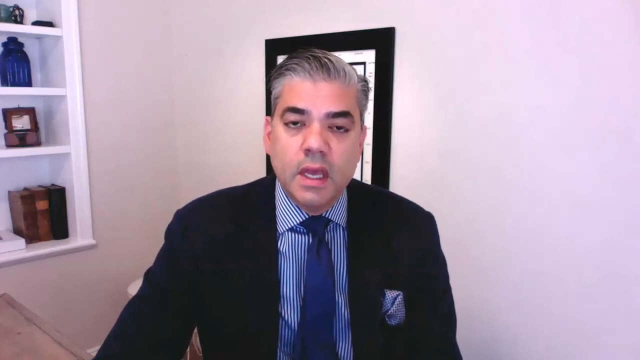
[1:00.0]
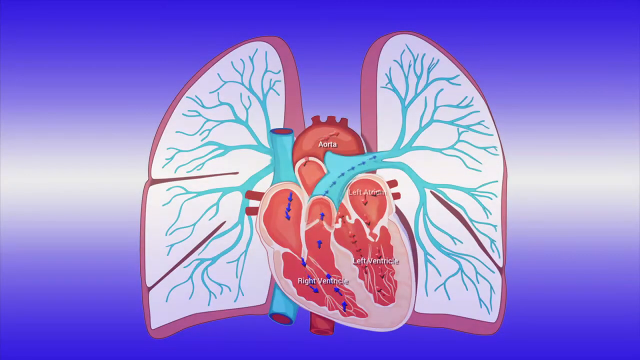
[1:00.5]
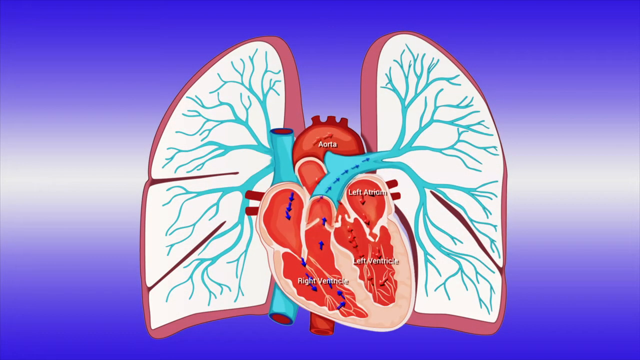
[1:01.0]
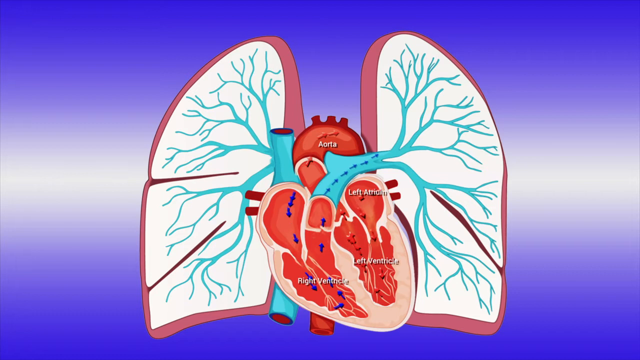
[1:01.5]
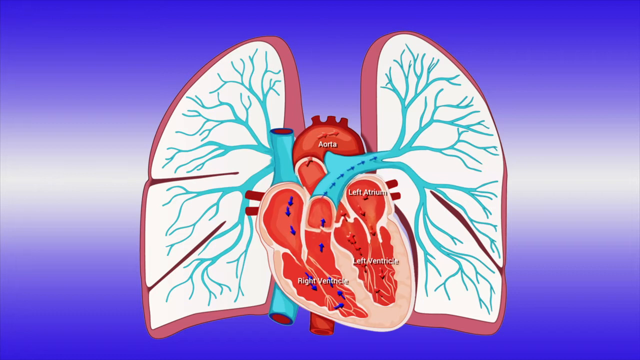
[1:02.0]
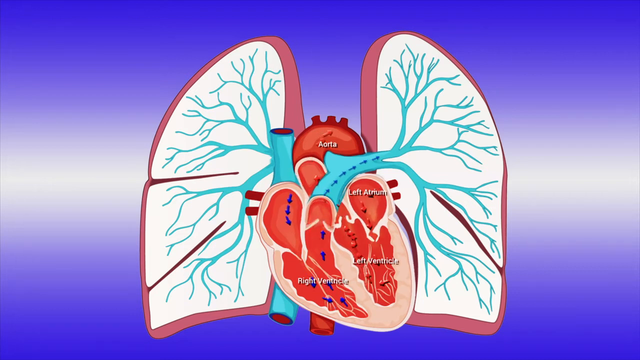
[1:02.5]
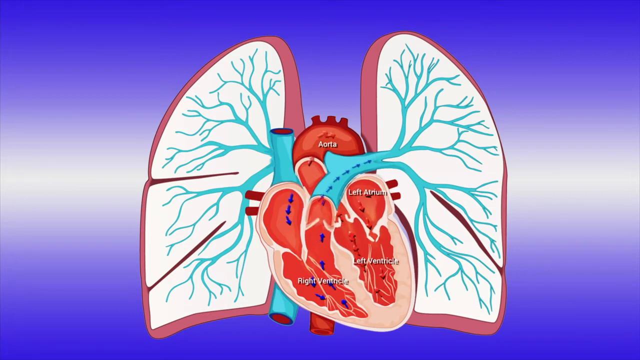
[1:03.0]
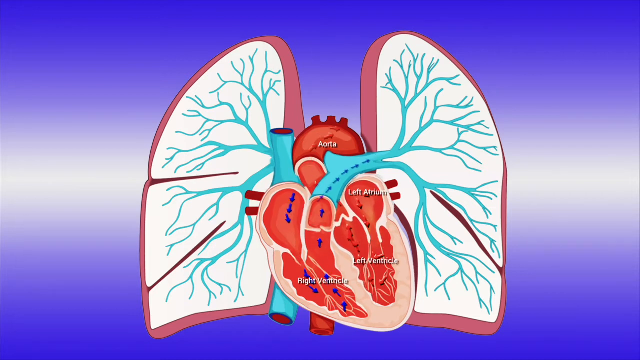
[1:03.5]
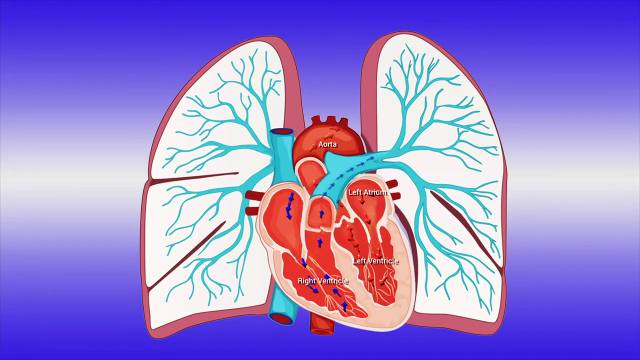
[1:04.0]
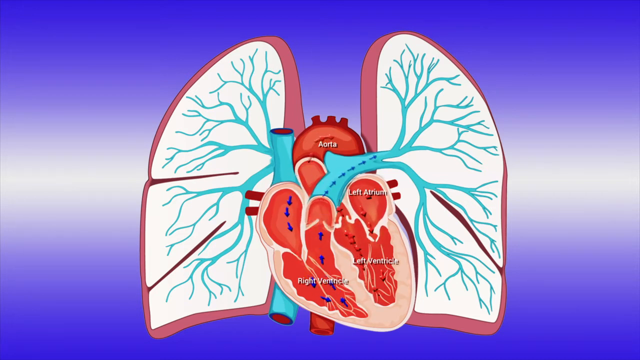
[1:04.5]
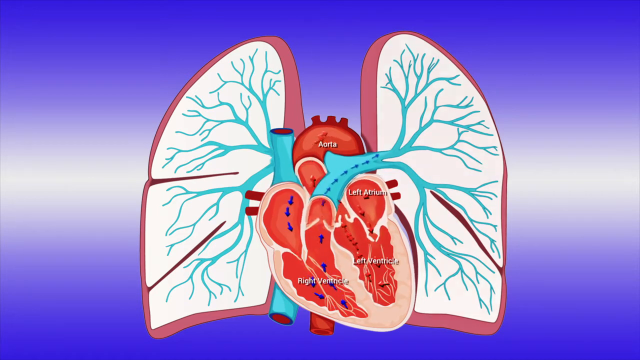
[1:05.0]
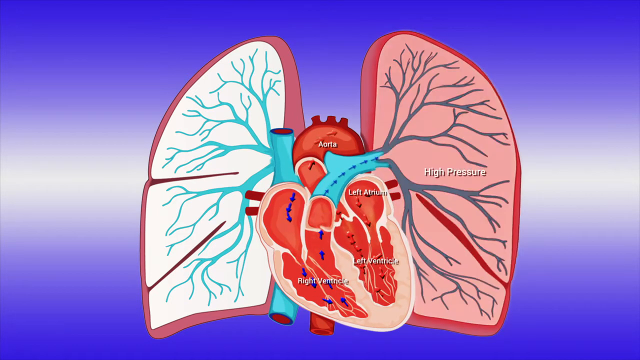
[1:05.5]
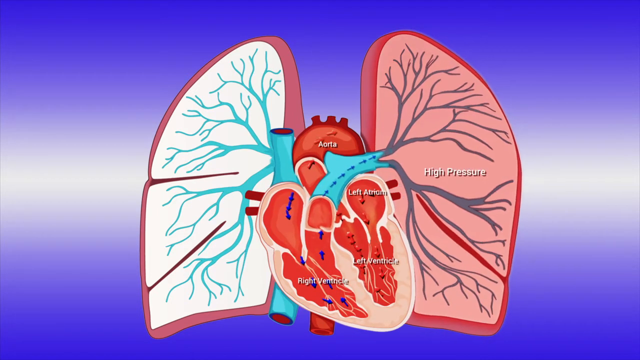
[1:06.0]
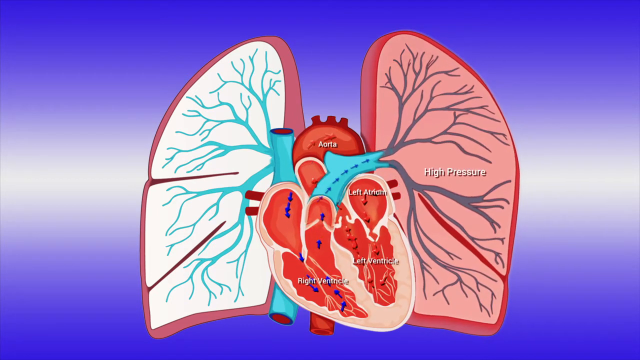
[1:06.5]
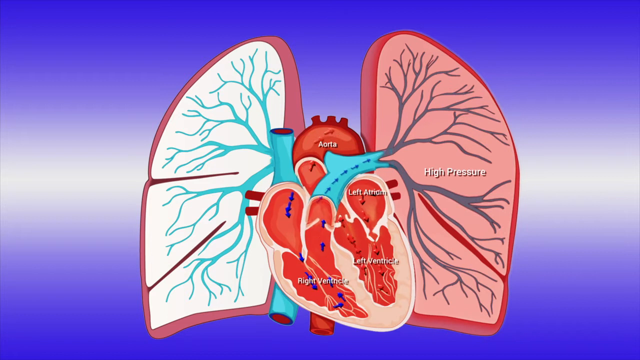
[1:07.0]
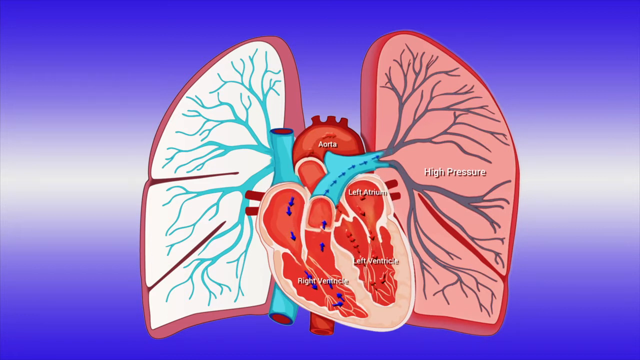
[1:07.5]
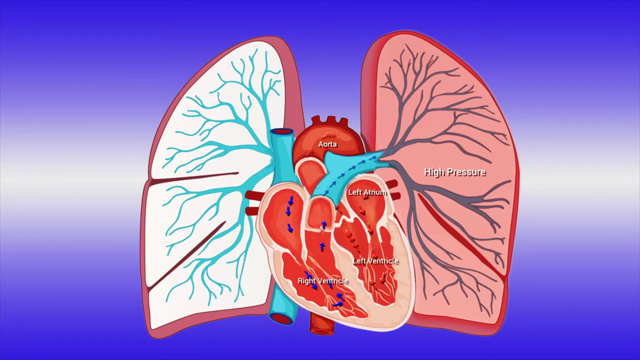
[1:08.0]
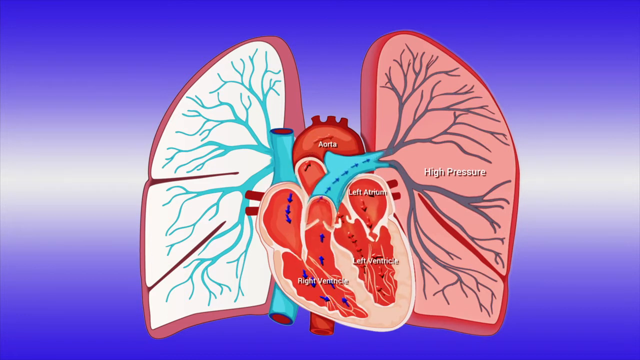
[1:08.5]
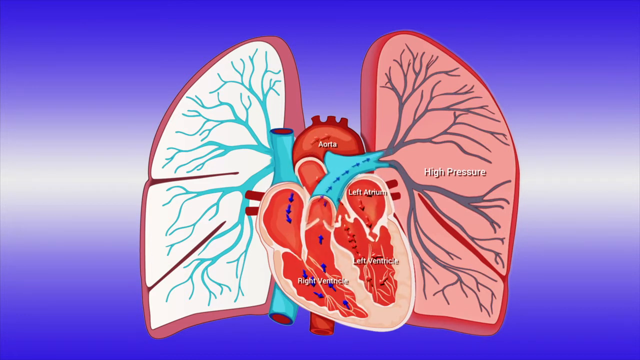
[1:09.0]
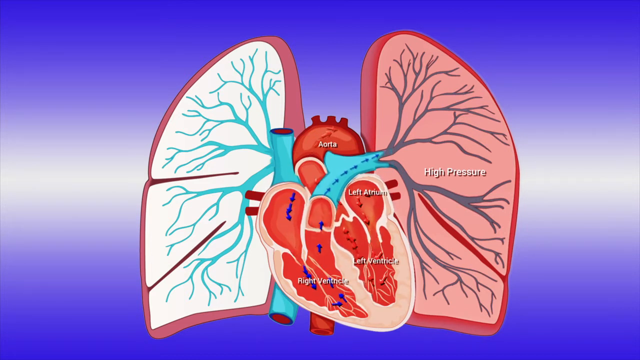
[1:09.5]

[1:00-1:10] After the man talks briefly, the video transitions to a diagram that looks like the heart and lungs. The heart in the center is labeled, with the aorta labeled at the top, along with the left atrium, left ventricle and right ventricle. Moving arrows on the screen seem to show blood flow within the heart, and possibly air flow. Blue arrows show movement into the right lung. The right lung is colored red while the left lung is white, and in the middle of the right lung white writing reads "high pressure".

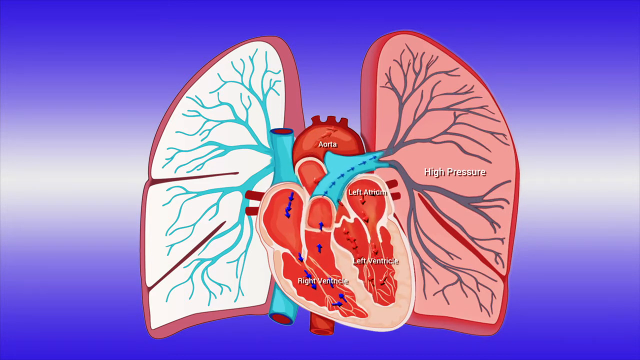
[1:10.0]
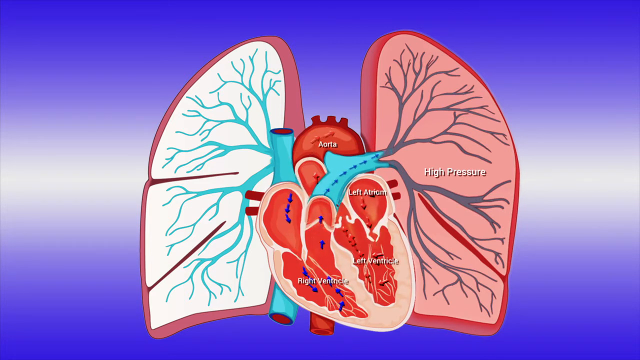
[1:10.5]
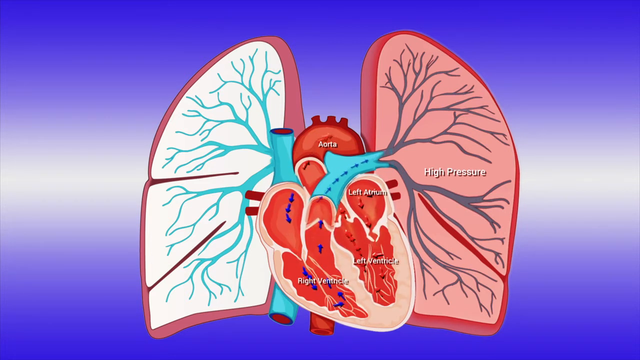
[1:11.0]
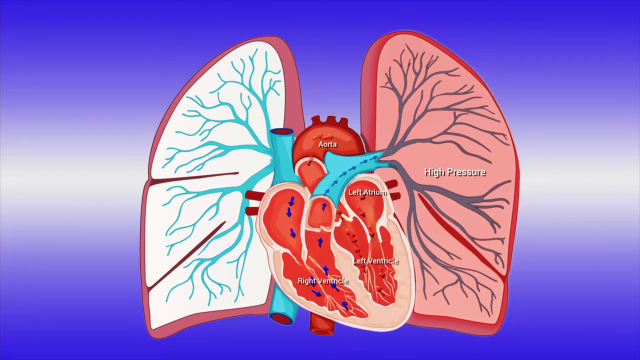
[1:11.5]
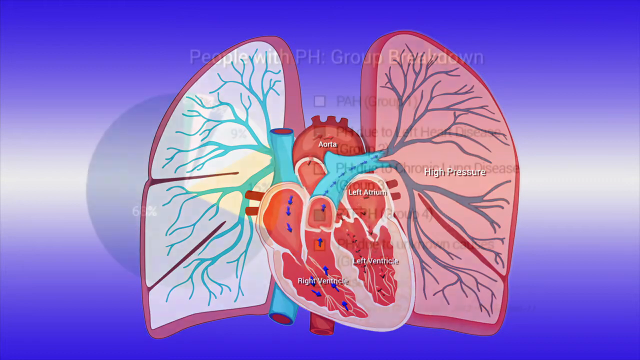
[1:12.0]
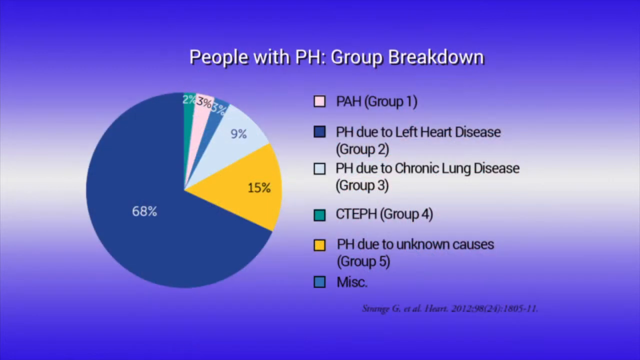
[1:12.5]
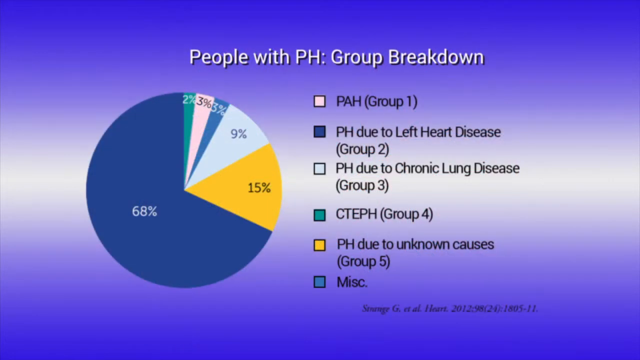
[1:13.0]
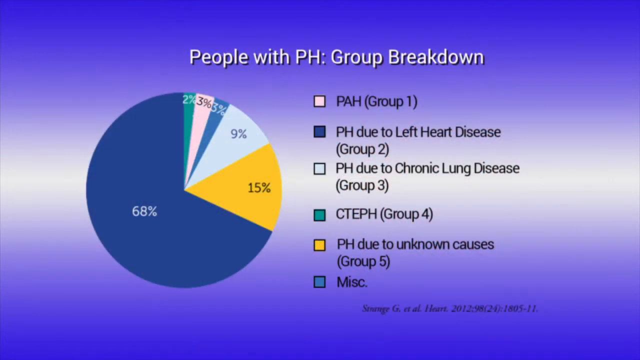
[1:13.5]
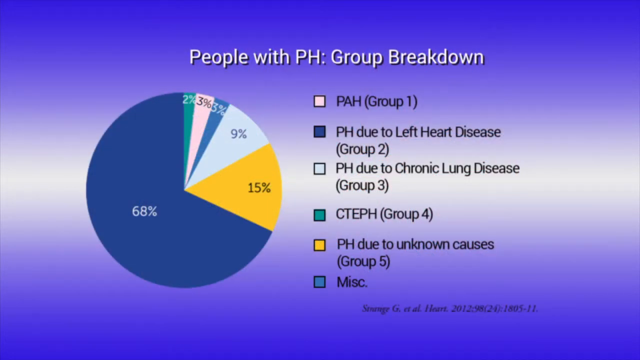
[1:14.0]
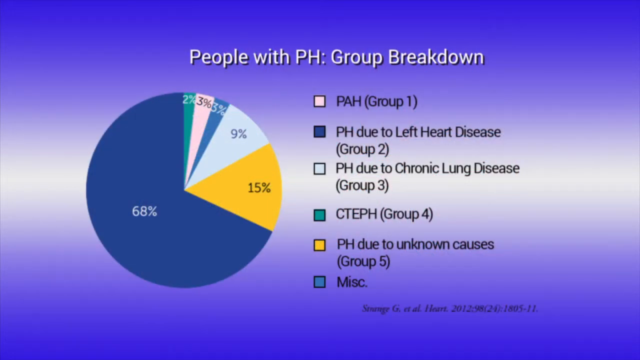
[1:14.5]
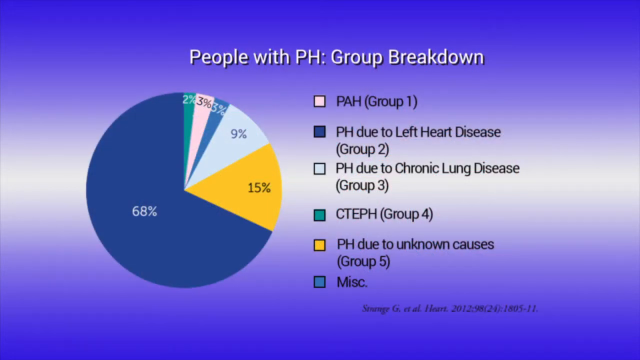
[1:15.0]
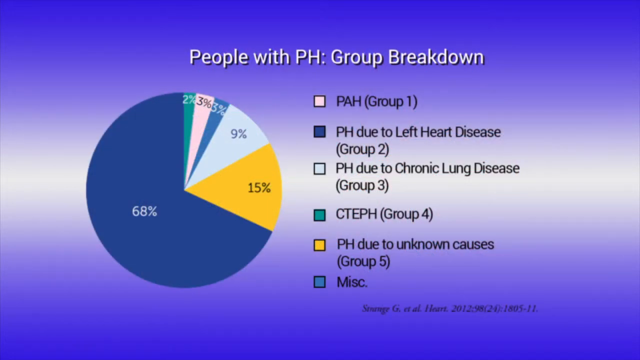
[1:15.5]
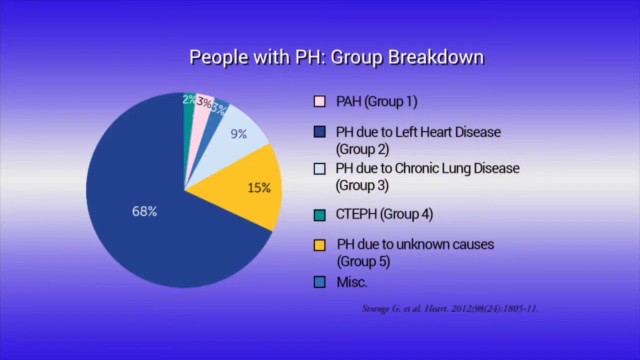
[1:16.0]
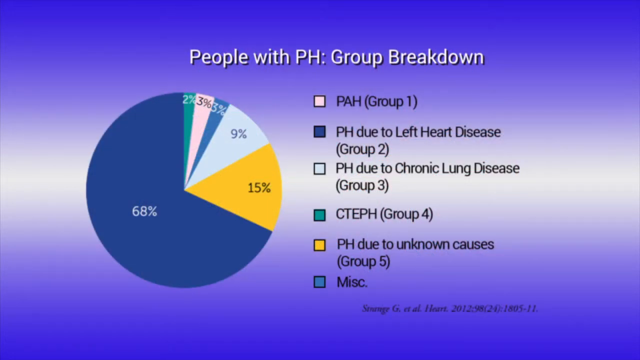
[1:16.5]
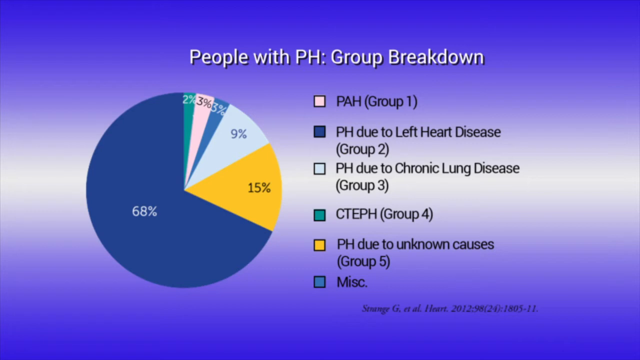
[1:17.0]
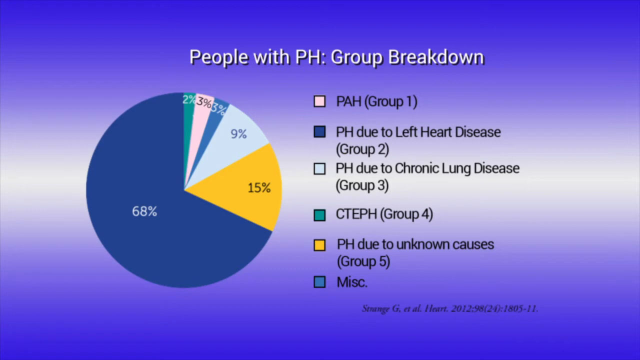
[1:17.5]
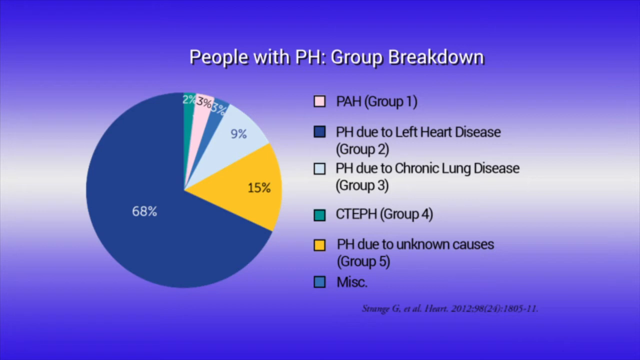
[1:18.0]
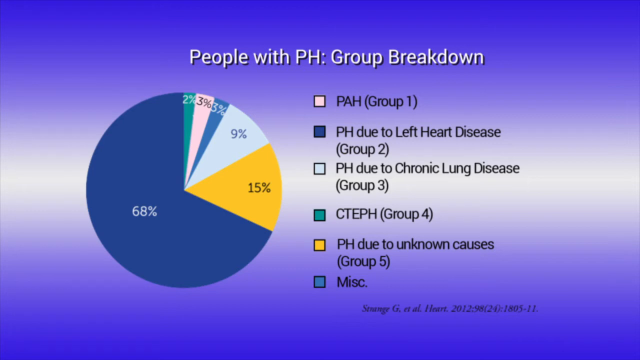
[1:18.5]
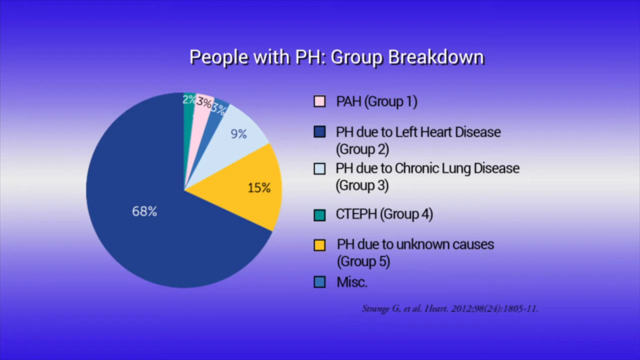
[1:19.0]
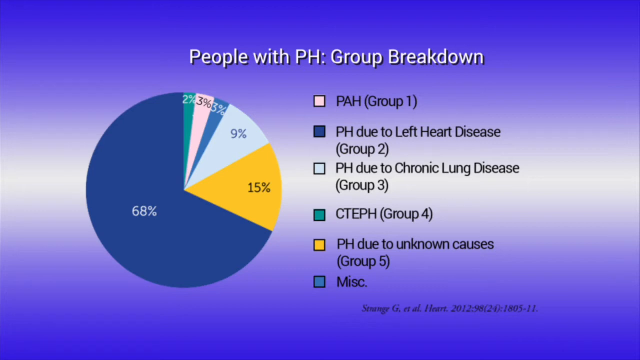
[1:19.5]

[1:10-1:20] The diagram continues, with the right lung labeled "under pressure". It quickly transitions to a pie chart headed "people with PH group breakdown", with the chart on the left and a legend on the right explaining the colors. The largest slice, 68%, is dark blue for "PH due to left heart disease group two". Next is 15% in yellow for "PH due to unknown causes group five", then 9% in light blue for "PH due to chronic lung disease group three". Two slices are 3% each: an aqua-blue one for "miscellaneous" and a pinkish-white one for "pah group one". Last is a turquoise 2% slice for "cteph group four".